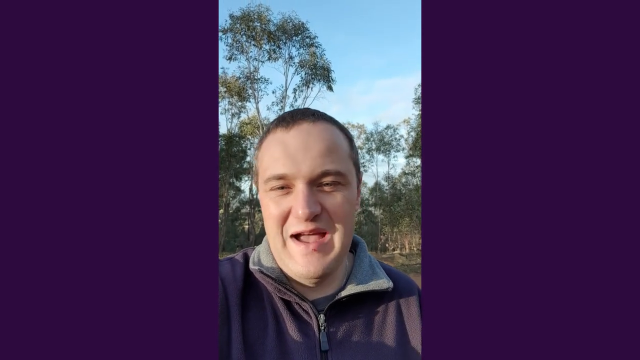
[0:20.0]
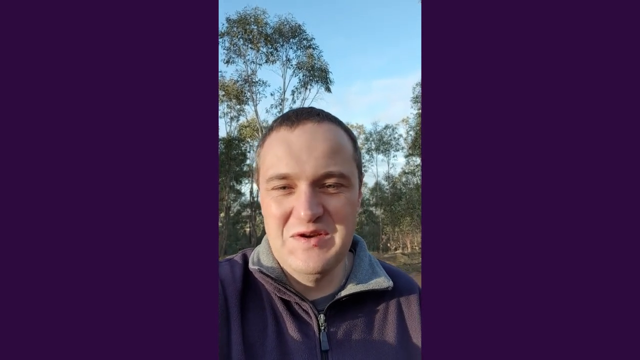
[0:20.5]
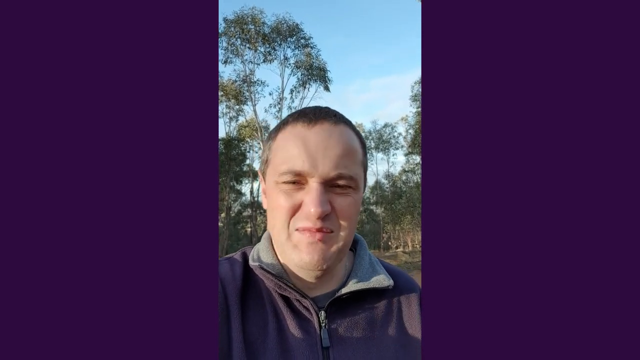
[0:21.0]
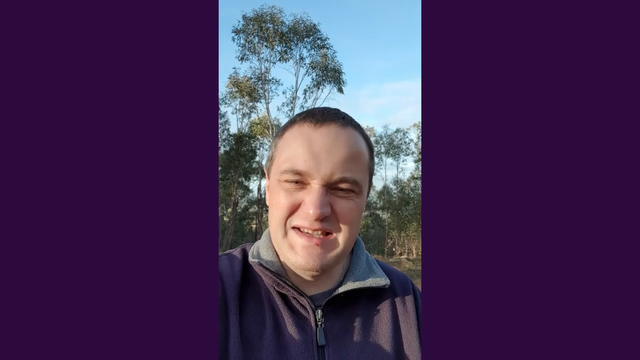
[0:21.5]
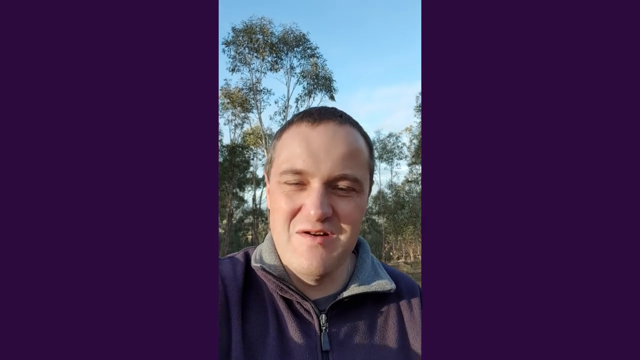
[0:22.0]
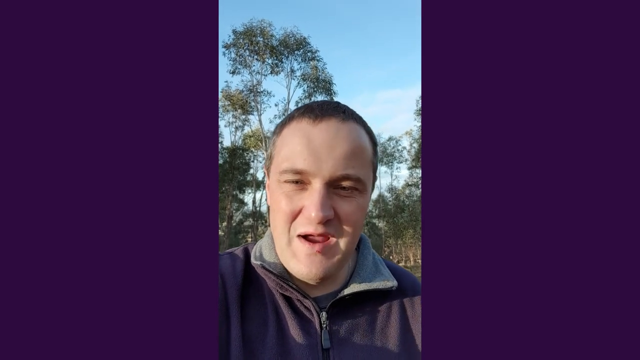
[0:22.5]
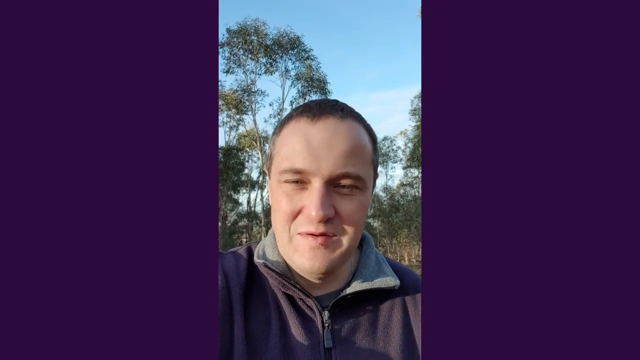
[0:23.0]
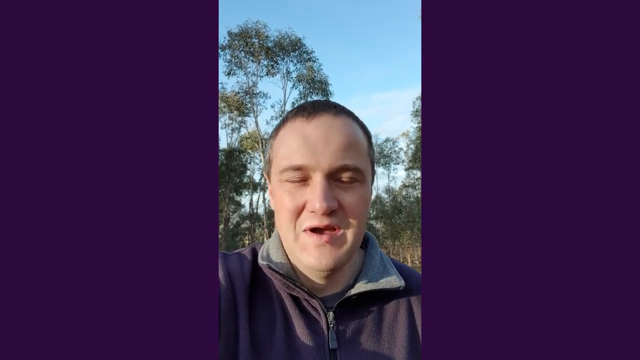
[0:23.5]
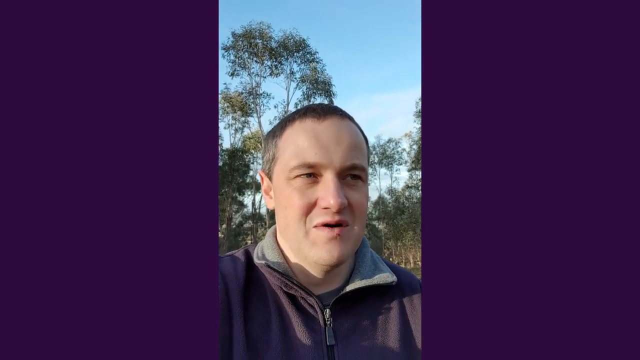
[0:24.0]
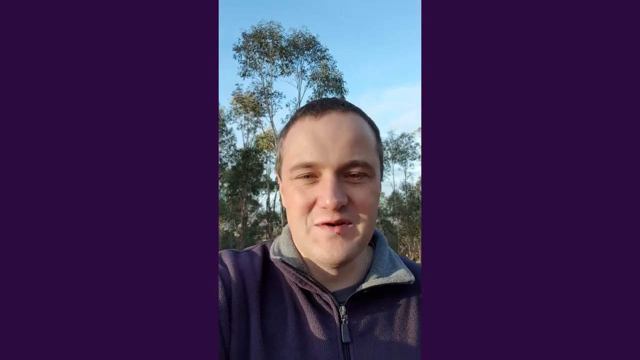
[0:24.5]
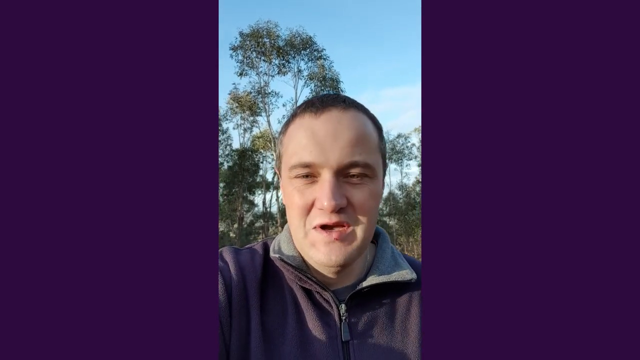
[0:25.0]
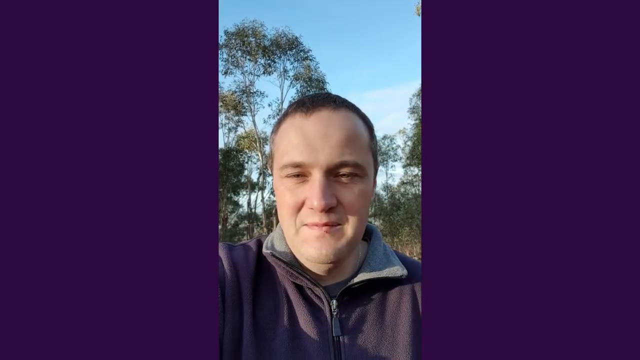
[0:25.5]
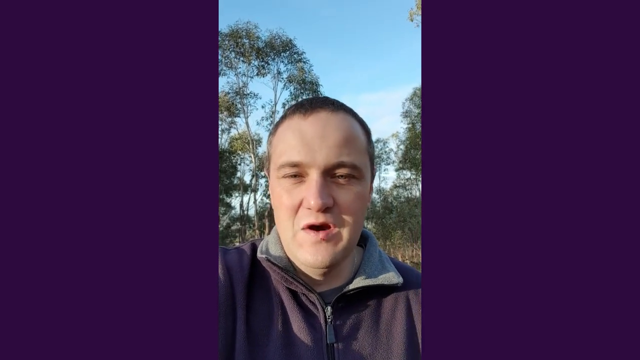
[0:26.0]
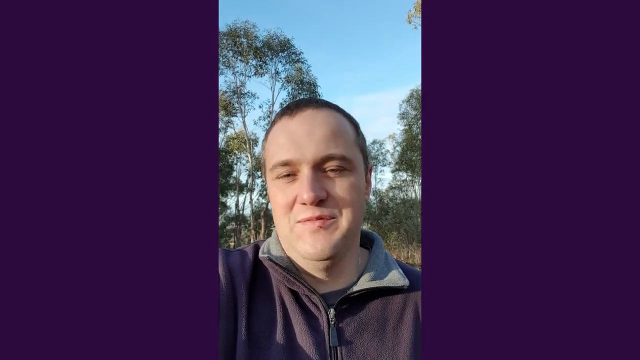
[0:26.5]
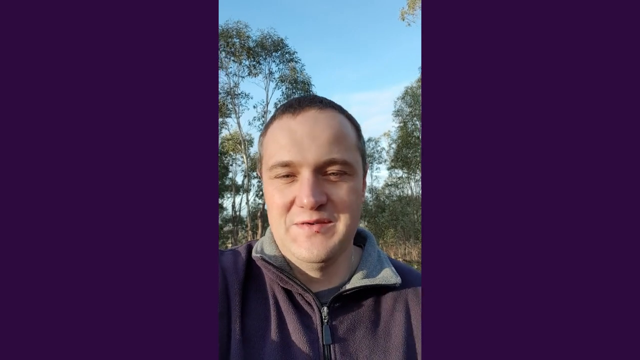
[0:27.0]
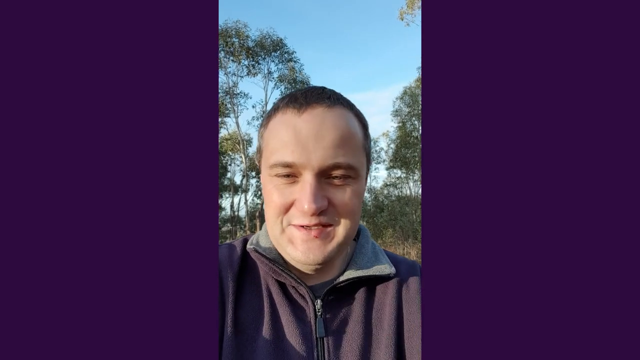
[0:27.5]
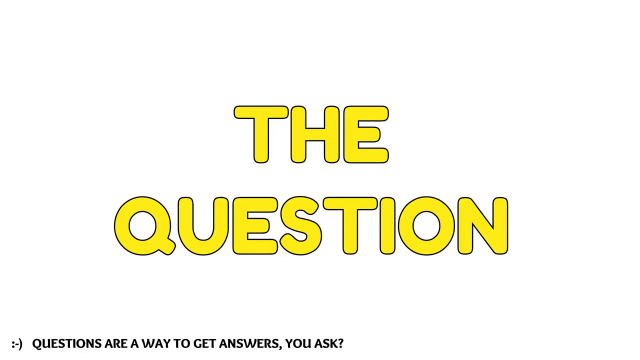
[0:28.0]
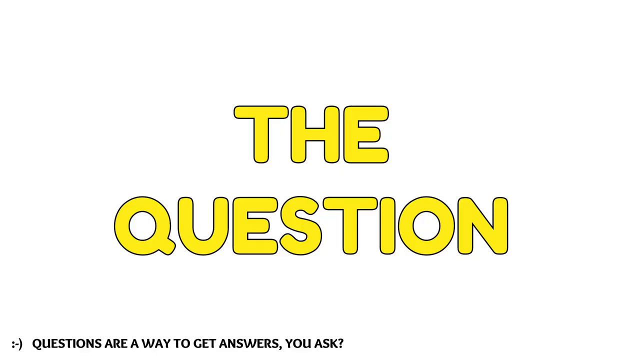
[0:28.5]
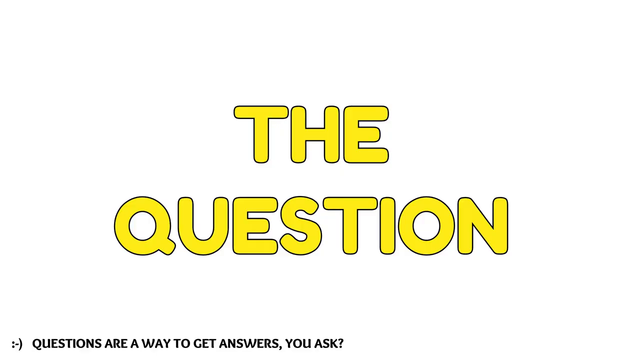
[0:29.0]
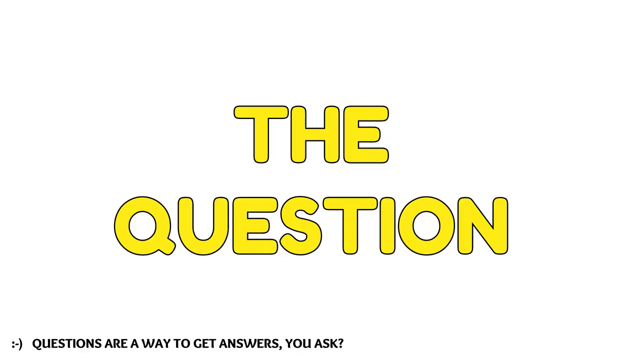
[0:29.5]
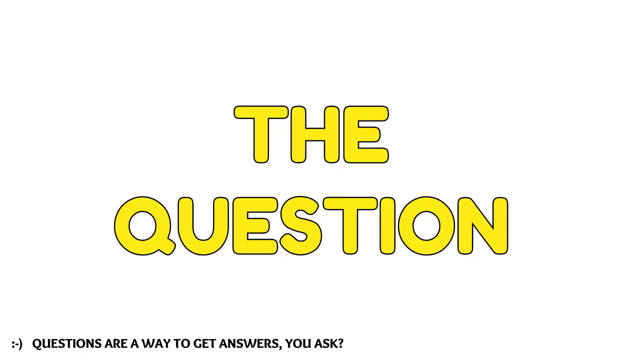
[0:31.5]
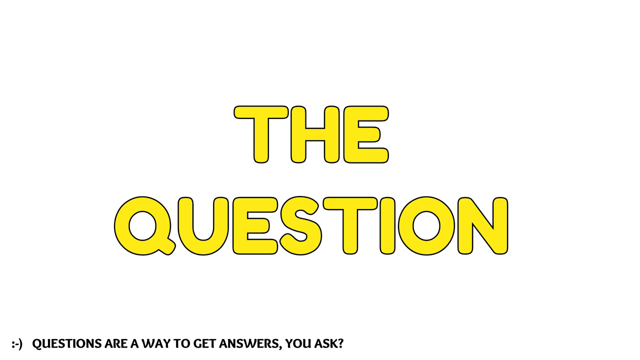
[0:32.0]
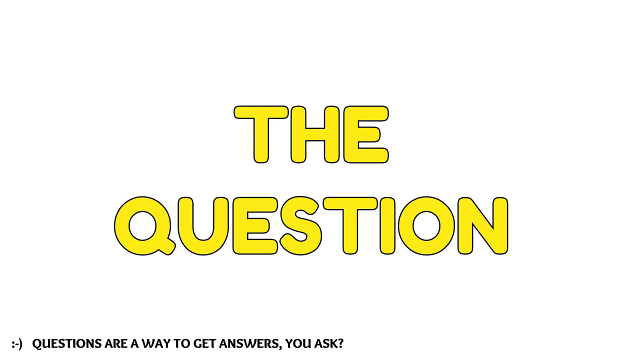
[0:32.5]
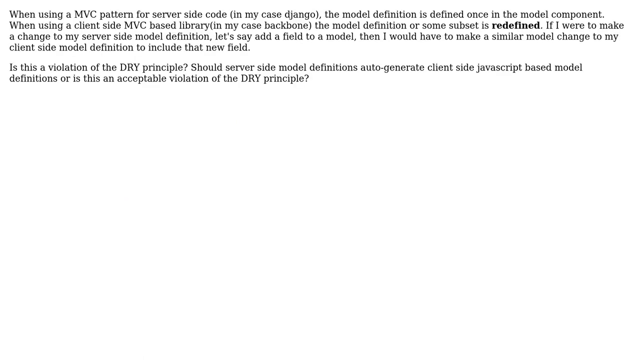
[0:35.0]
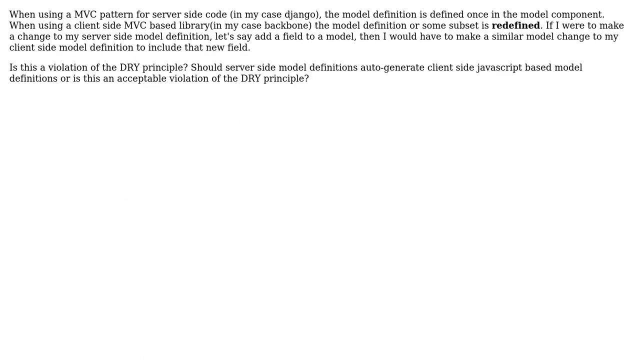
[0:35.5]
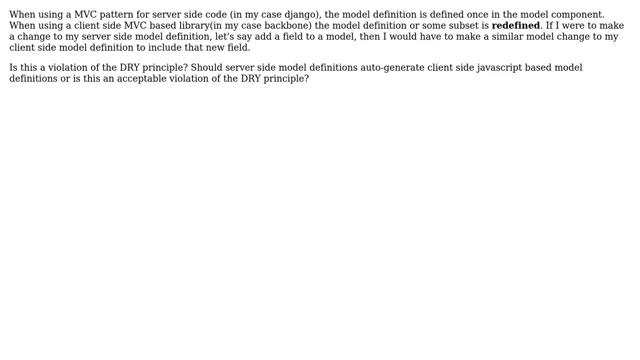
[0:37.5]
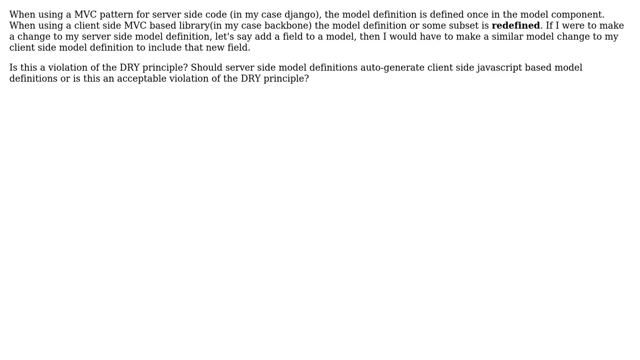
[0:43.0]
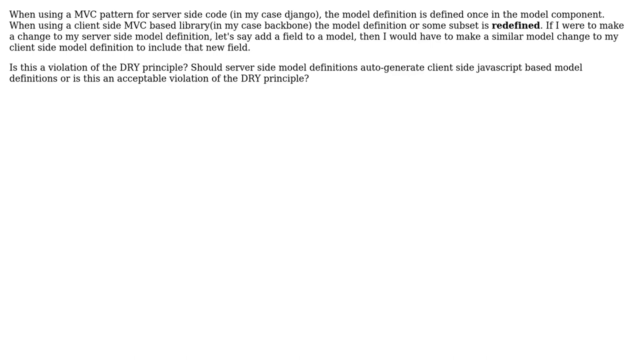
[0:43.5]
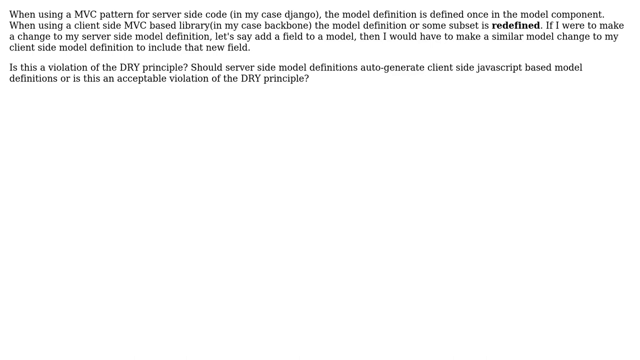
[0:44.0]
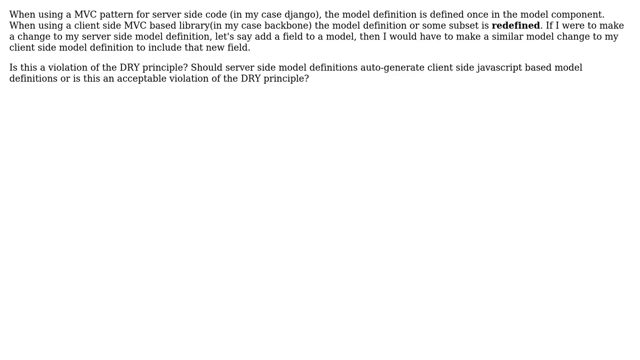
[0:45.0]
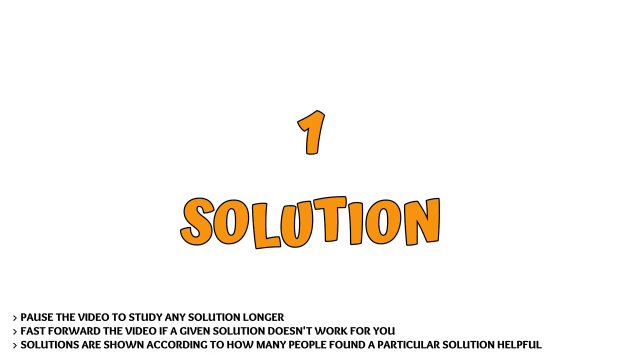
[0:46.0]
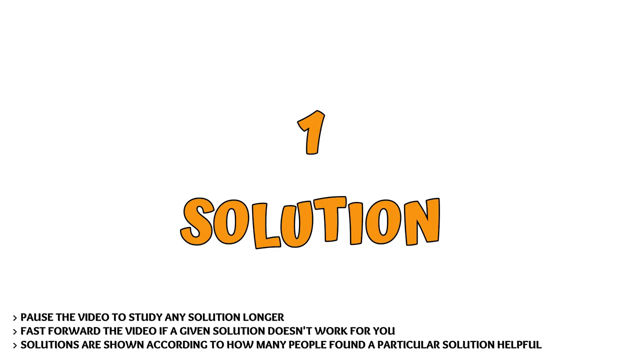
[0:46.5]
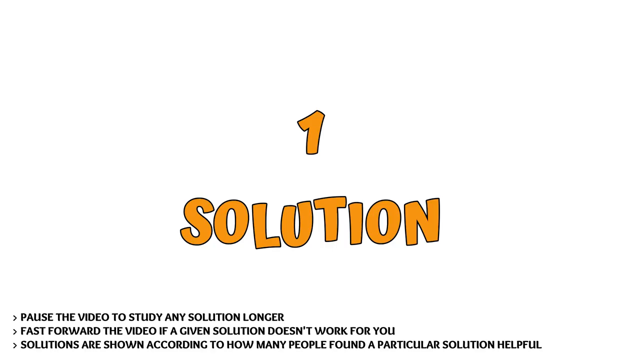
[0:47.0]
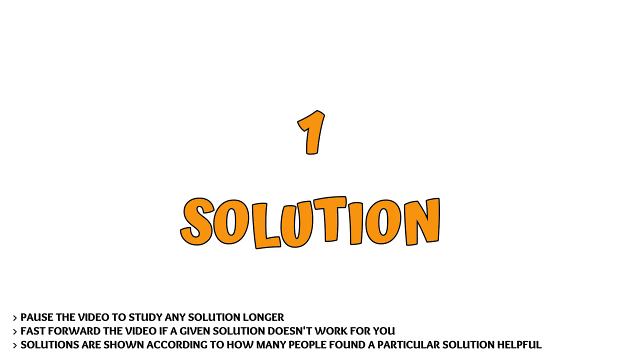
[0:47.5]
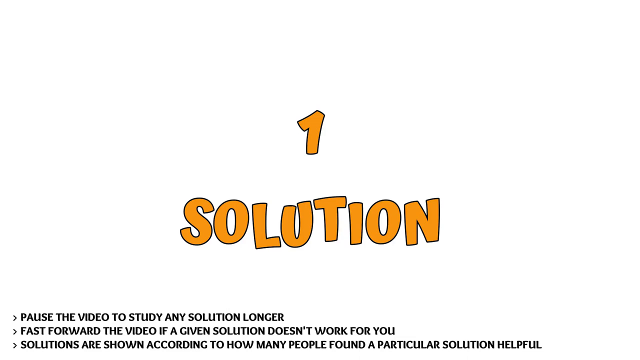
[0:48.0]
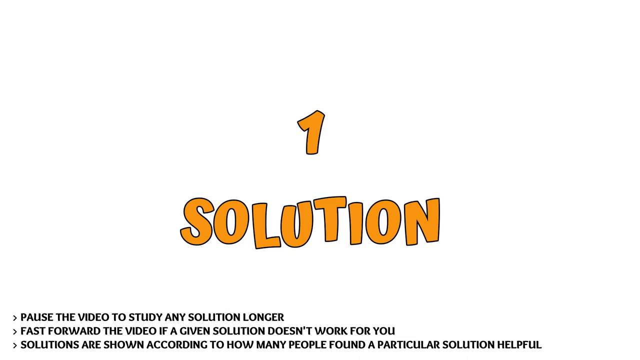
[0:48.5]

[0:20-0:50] The man keeps talking while recording himself, holding up a cell phone that faces him; the phone itself is not visible, but what looks like his right arm is holding it up in front of him. He keeps looking at the camera as he talks. The scene changes to a full white background with two large words, "the question", in yellow font in the very middle. In the bottom left corner, small black text reads "questions are a way to get answers you ask". Next, a description in black font appears at the top of the page, still on a white background; it mentions different technology terms, including "MVC pattern", and JavaScript. The screen then shows "One Solution" in very large light orange text in the center. Smaller black text appears at the bottom, and the bottom-left text reads "Pause the video to study any solution longer. Fast-forward the video if a given solution doesn't work for you. Solutions are shown according to how many people found a particular solution helpful."